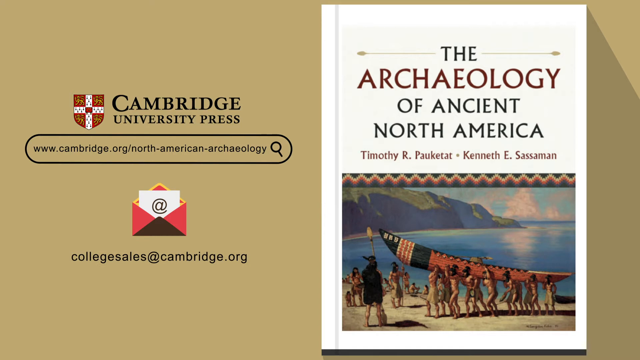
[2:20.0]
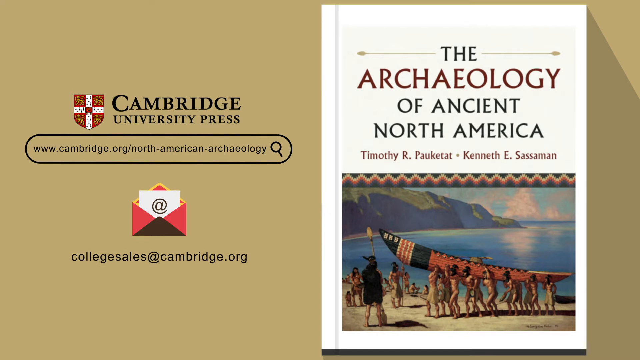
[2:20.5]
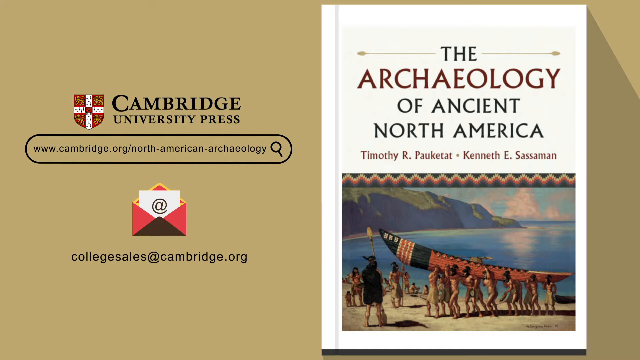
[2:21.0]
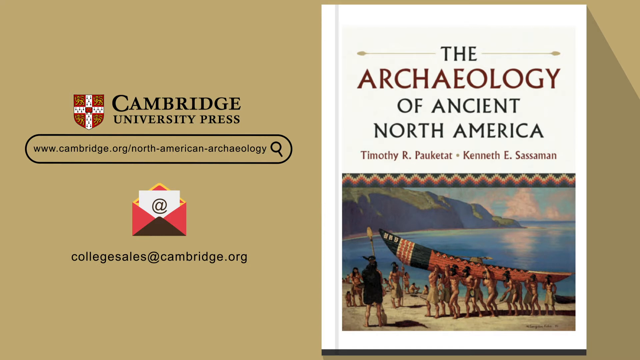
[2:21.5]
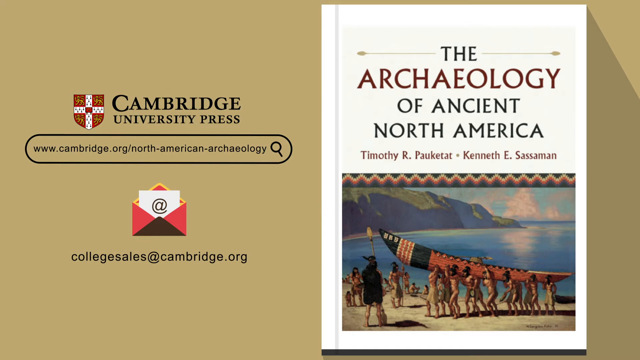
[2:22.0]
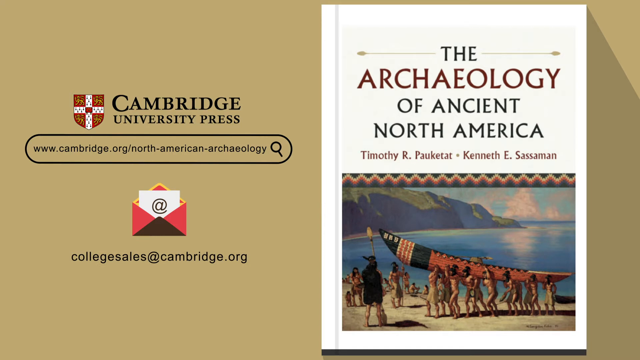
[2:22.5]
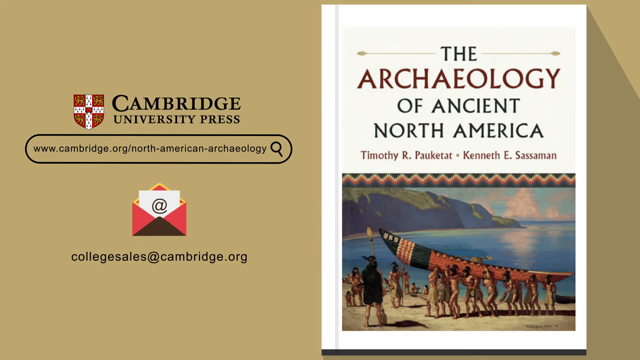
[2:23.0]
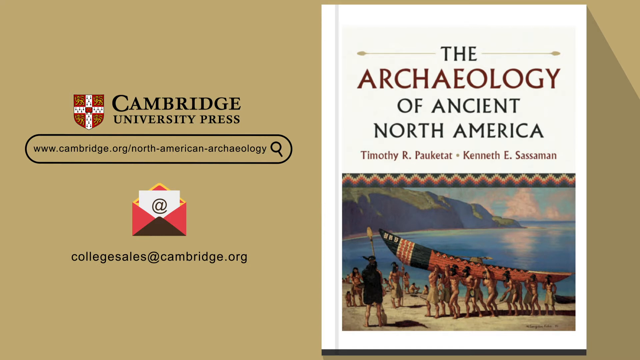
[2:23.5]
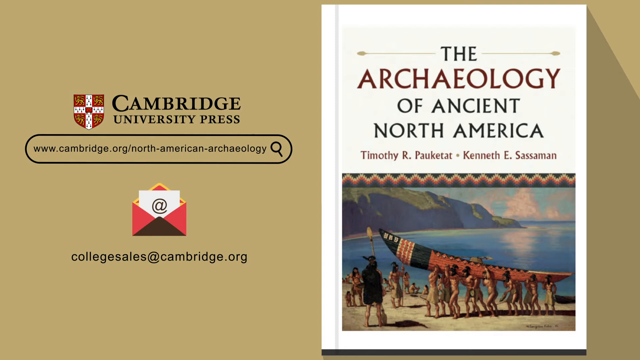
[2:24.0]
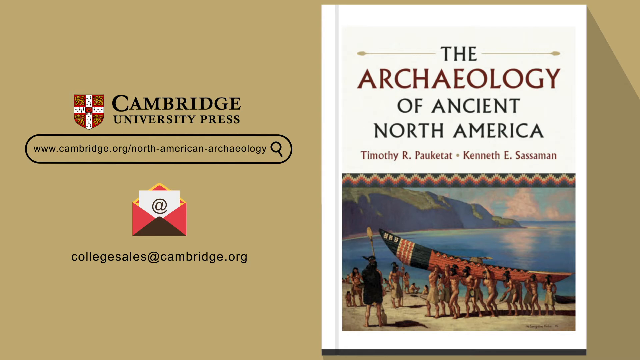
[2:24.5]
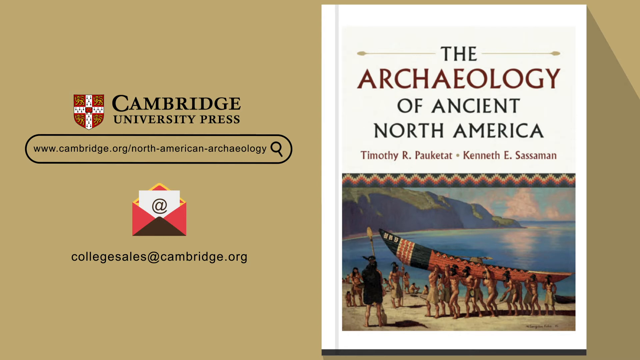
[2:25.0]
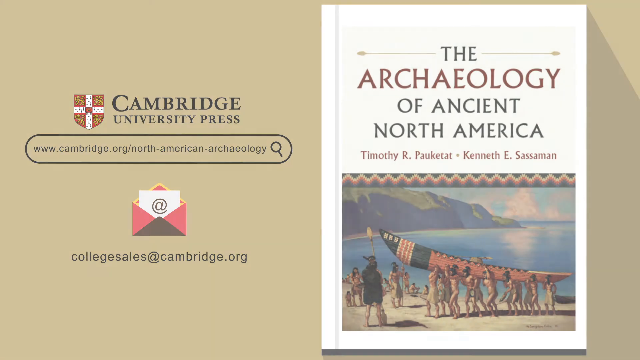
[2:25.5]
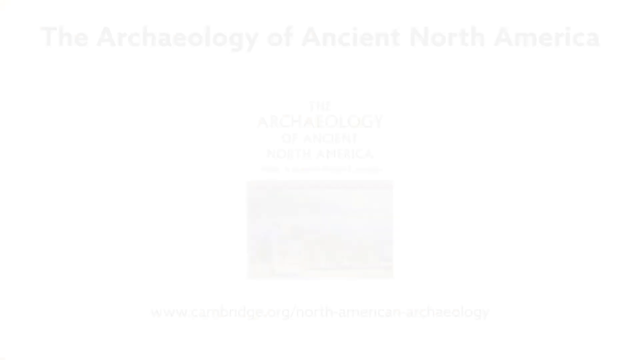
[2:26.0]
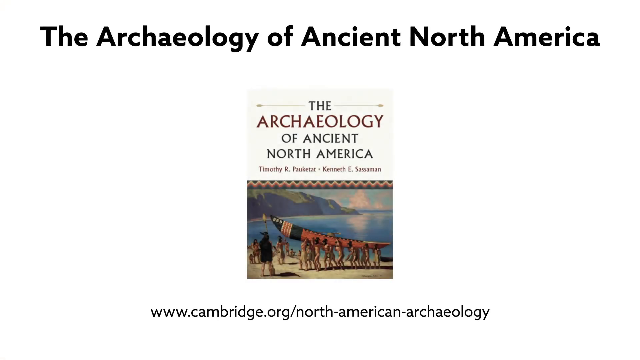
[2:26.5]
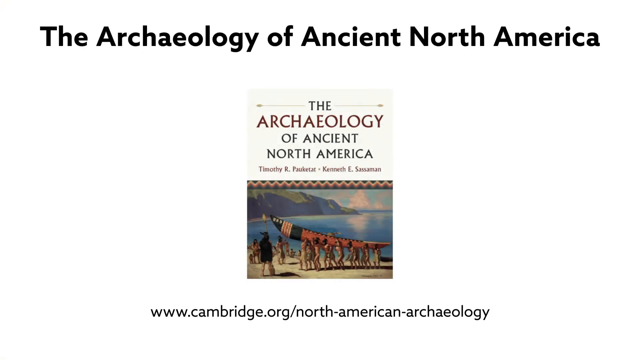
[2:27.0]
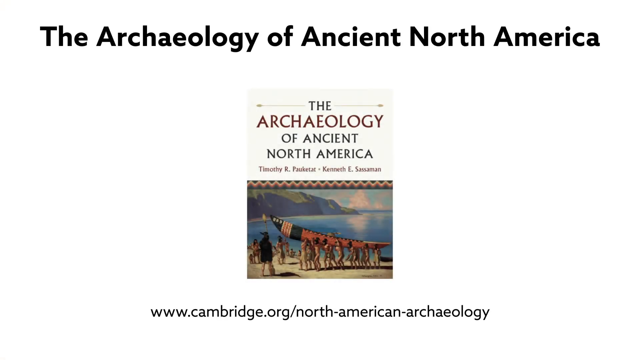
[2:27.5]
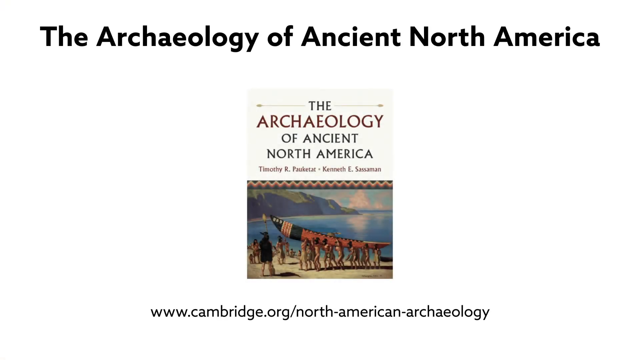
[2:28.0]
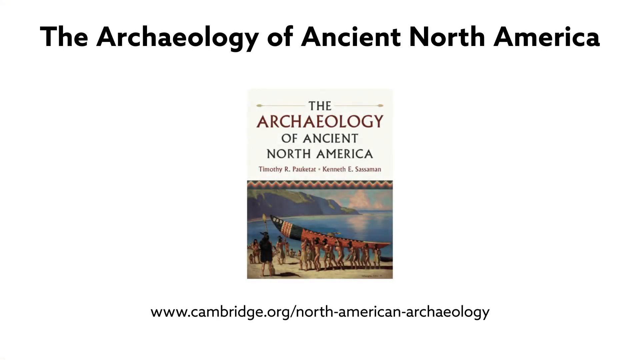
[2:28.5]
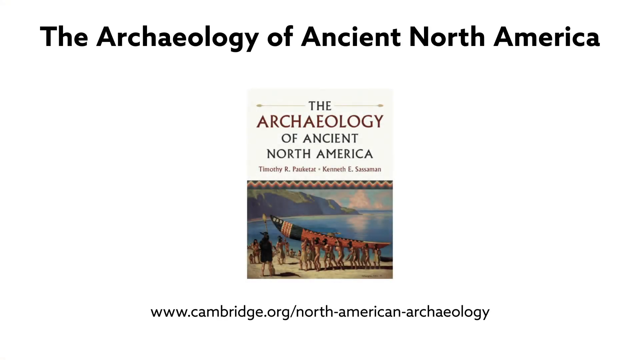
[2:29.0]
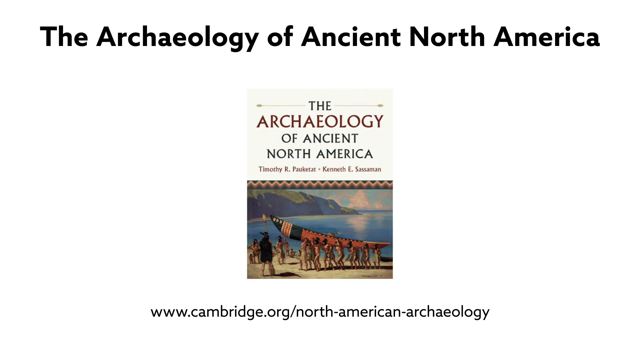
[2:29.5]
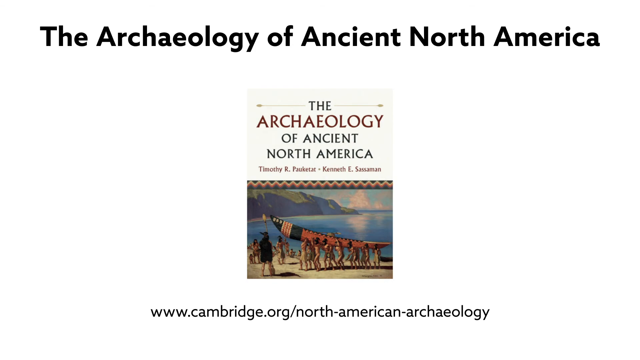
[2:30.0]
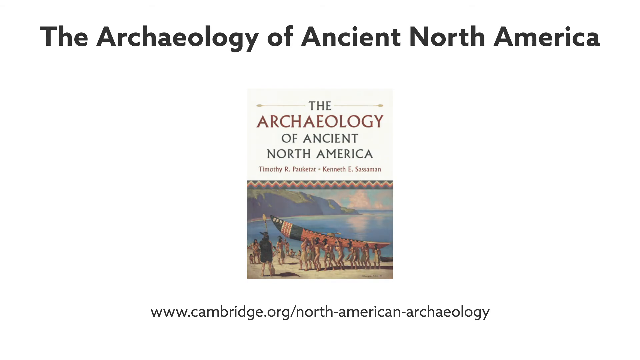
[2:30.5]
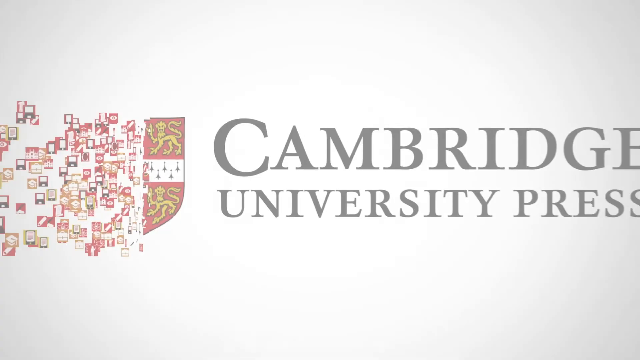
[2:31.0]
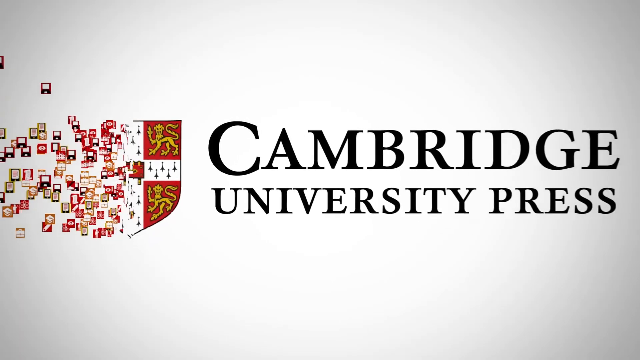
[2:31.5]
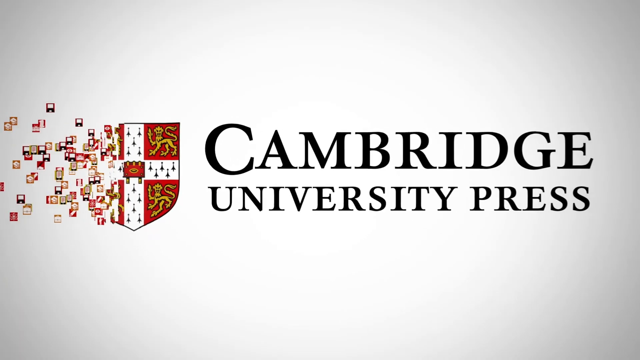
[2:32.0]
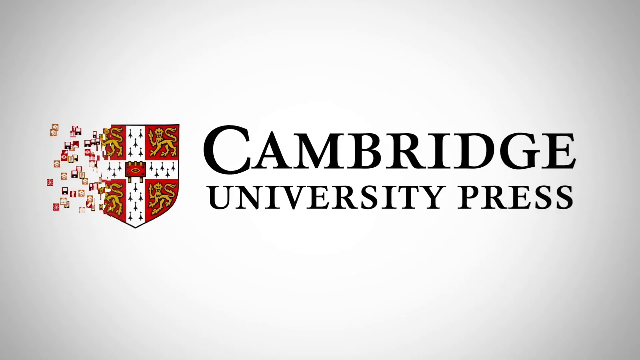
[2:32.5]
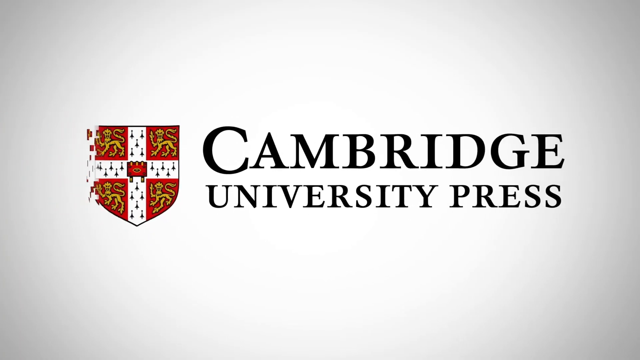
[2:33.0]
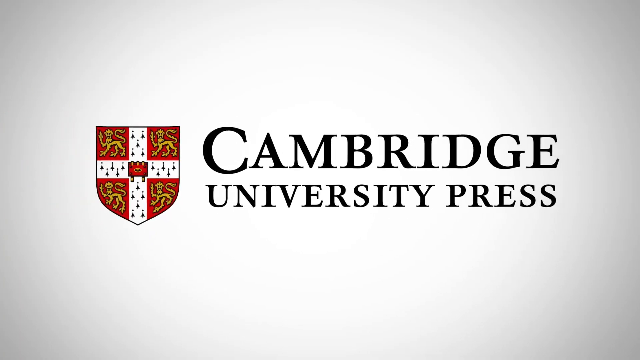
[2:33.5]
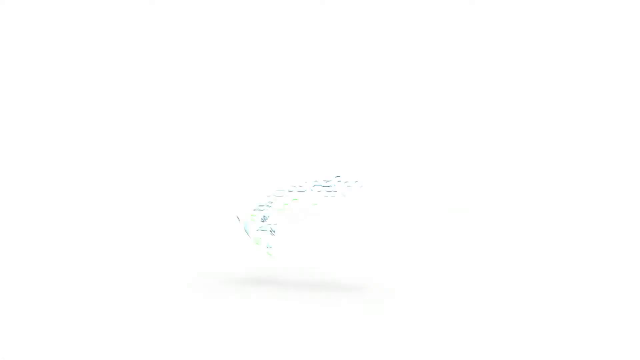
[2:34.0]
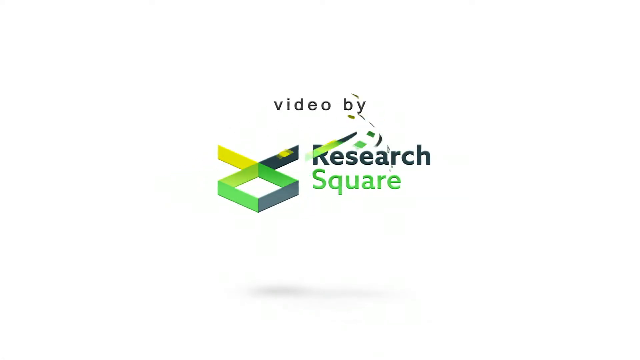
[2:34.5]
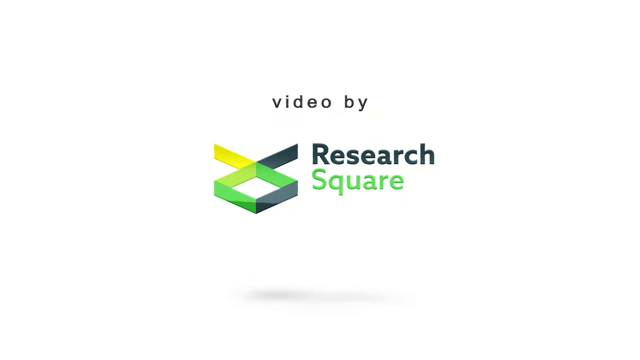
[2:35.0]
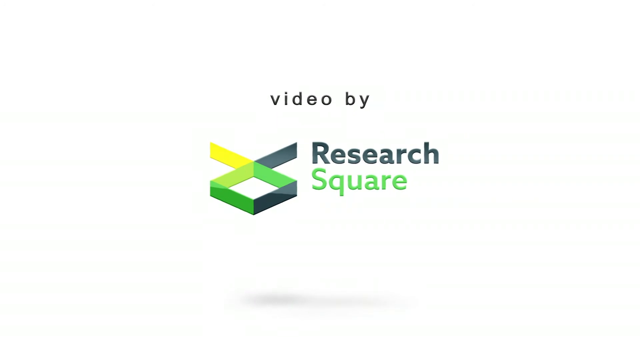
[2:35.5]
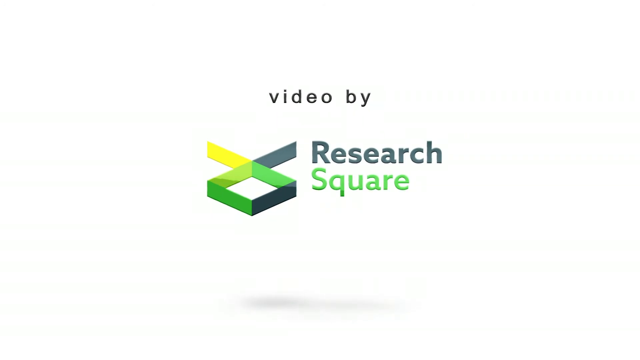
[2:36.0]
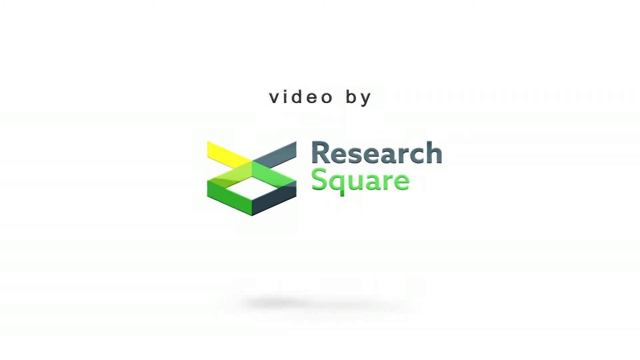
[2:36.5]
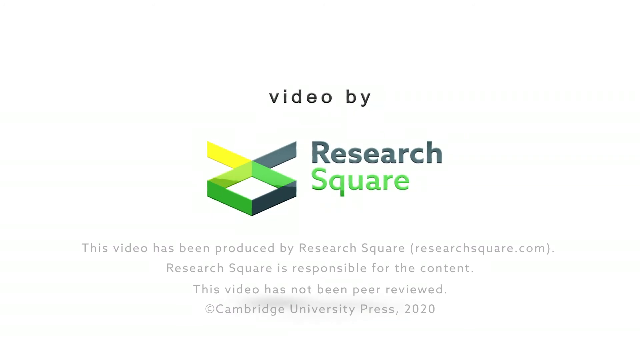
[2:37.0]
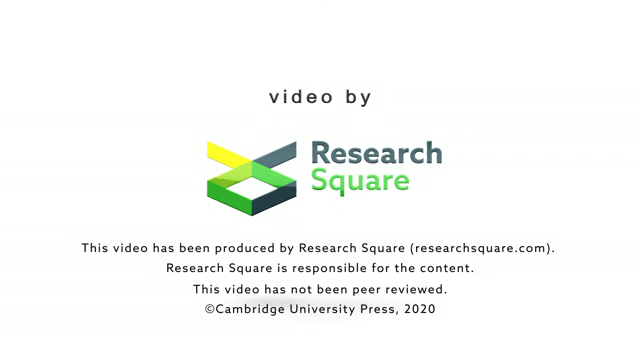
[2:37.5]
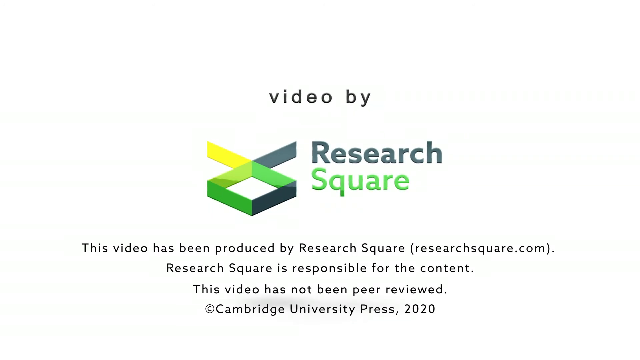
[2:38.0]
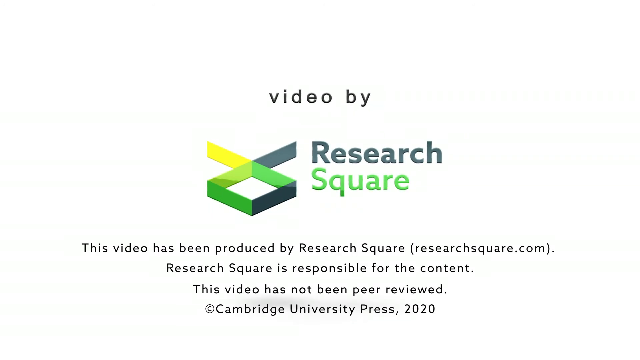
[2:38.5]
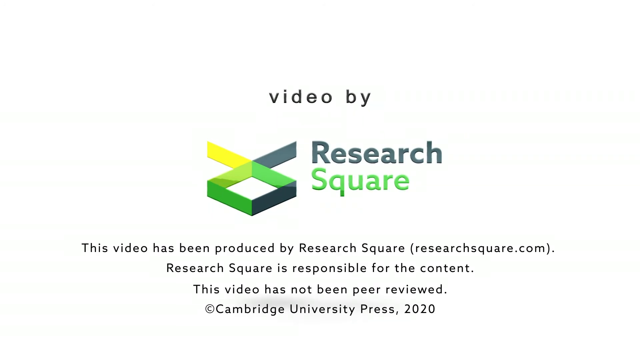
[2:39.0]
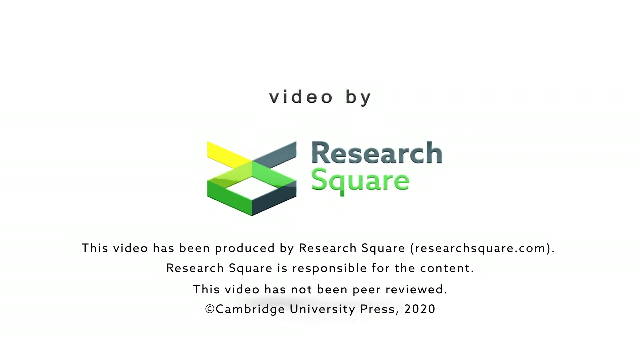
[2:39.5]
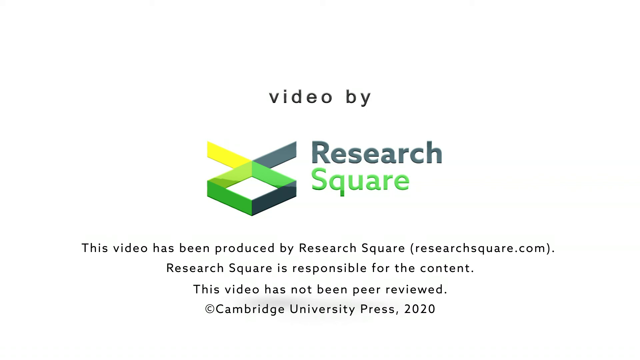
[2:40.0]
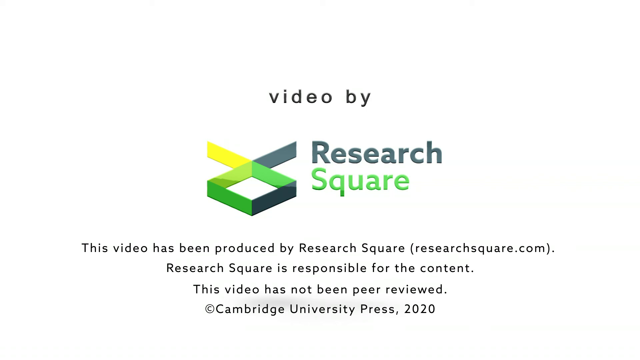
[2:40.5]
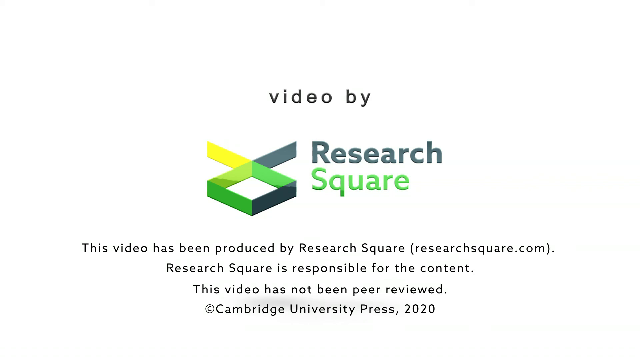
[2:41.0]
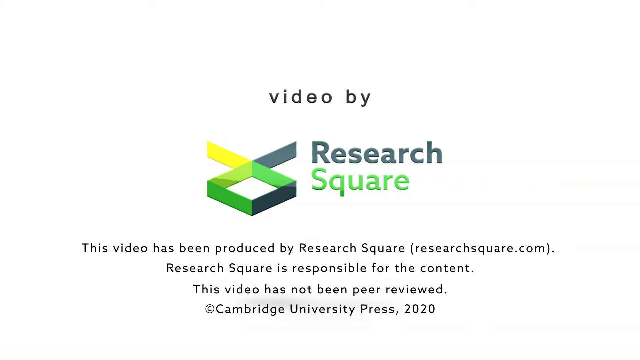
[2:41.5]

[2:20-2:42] The book cover, The Archeology of Ancient North America, continues on screen, now in the right portion, while the left contains more text: the Cambridge University Press logo, its URL in a large oval below it, an email icon of a red envelope with a paper bearing an at sign just below, and the email address collegesales@cambridge.org below that. The video ends with a white background showing the book, followed by an illustration of Cambridge University Press and a logo reading "Video by Research Square." Text states that the video was produced by Research Square, that Research Square is responsible for the content, and that the video has not been peer-reviewed.